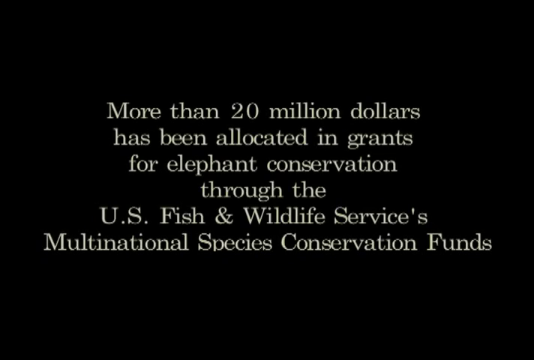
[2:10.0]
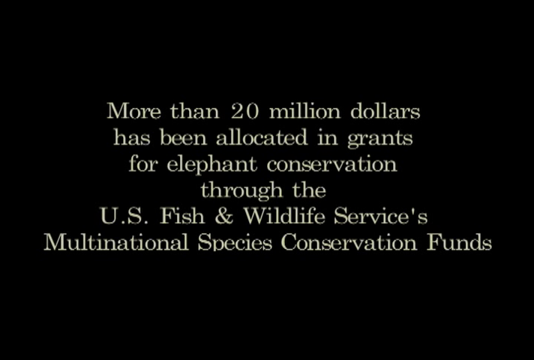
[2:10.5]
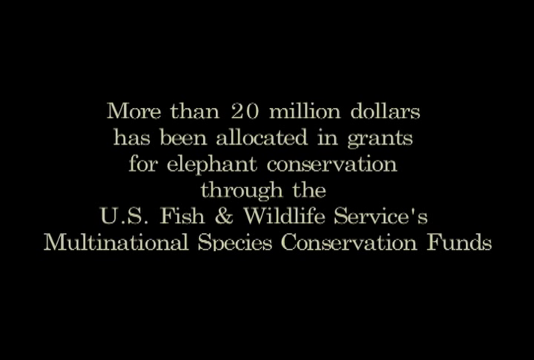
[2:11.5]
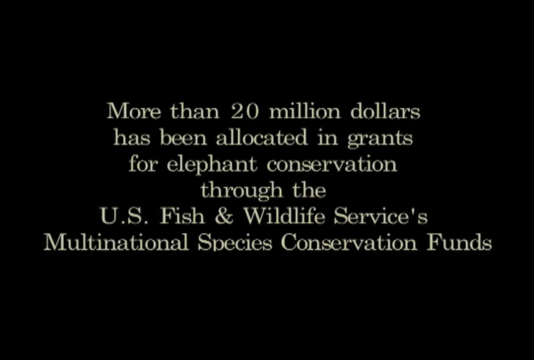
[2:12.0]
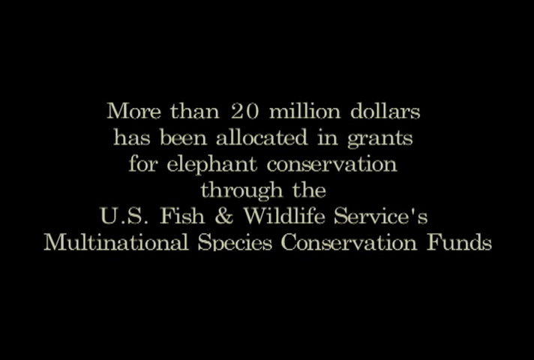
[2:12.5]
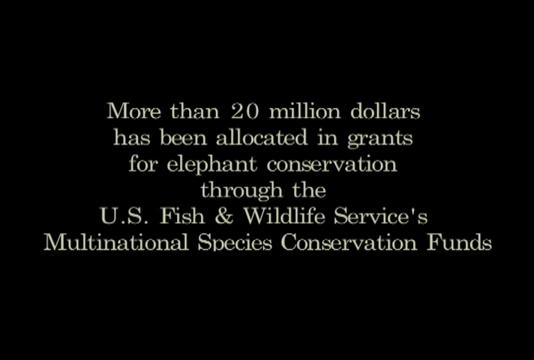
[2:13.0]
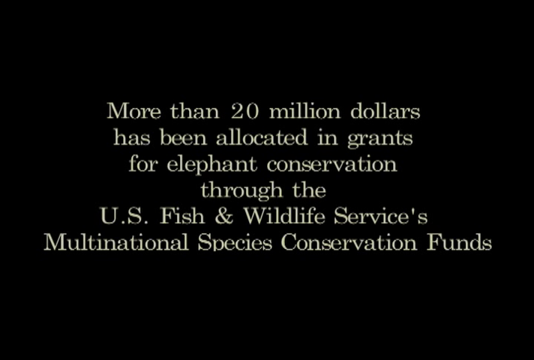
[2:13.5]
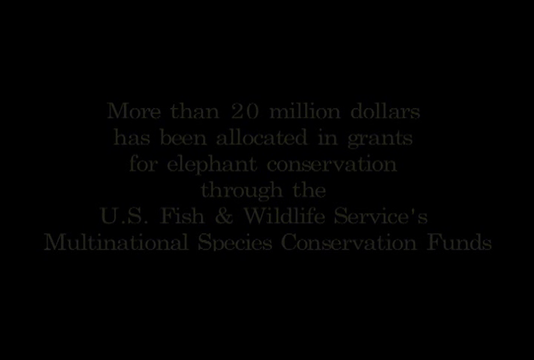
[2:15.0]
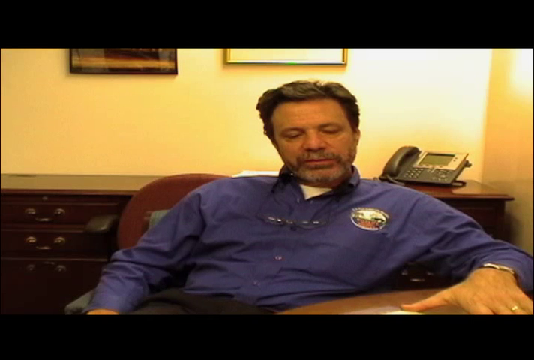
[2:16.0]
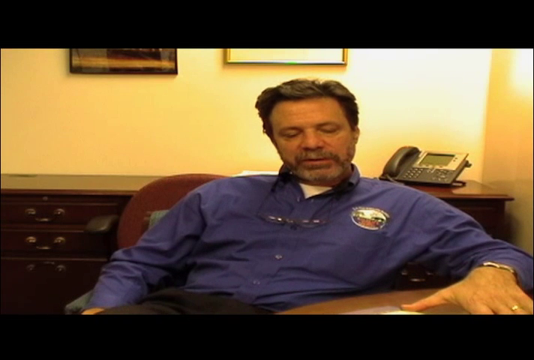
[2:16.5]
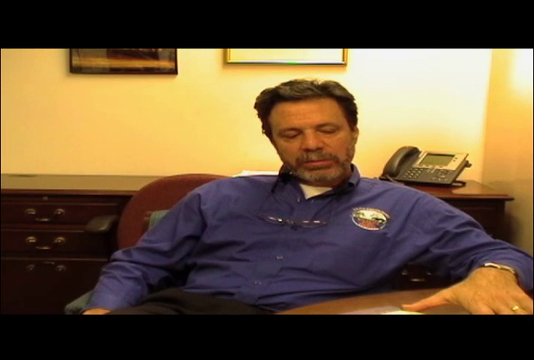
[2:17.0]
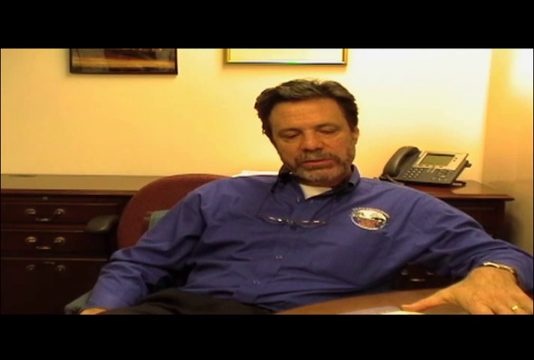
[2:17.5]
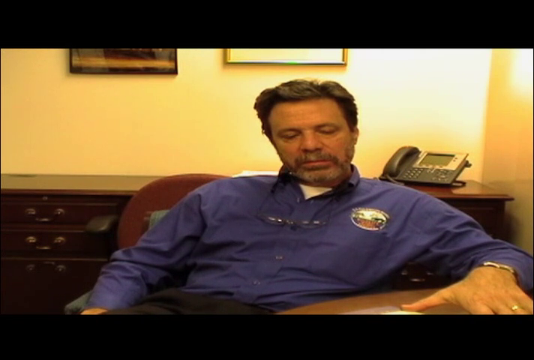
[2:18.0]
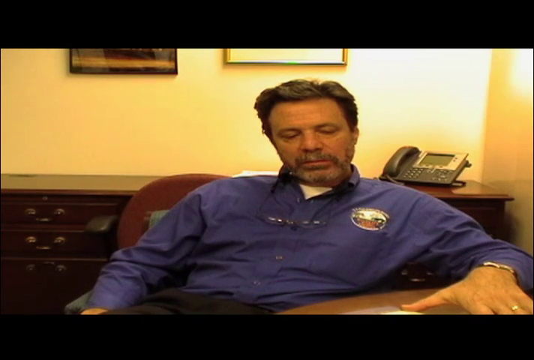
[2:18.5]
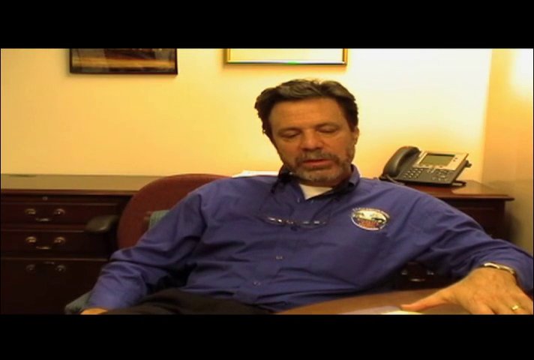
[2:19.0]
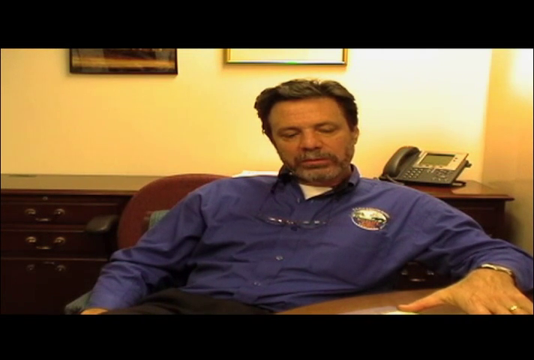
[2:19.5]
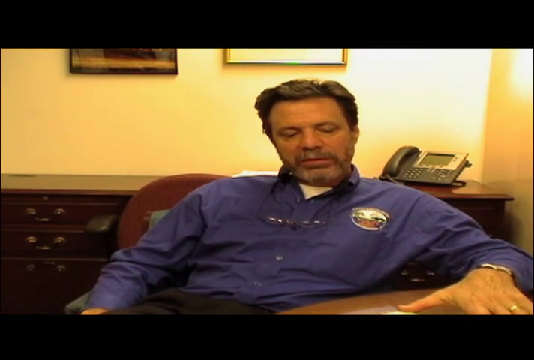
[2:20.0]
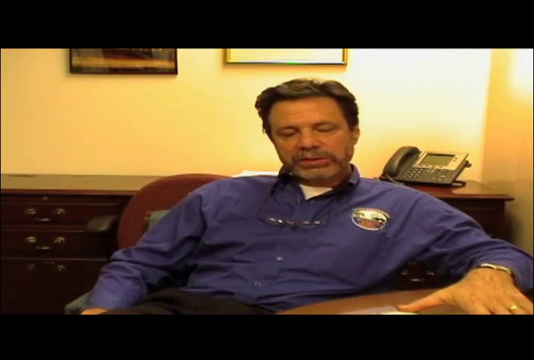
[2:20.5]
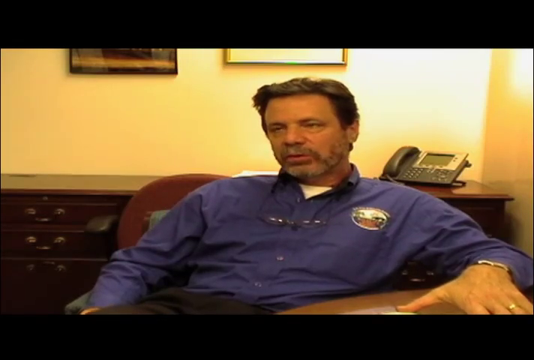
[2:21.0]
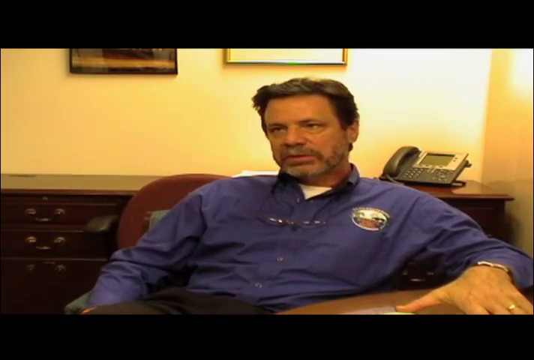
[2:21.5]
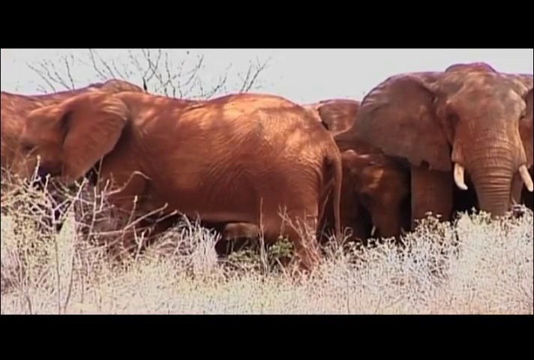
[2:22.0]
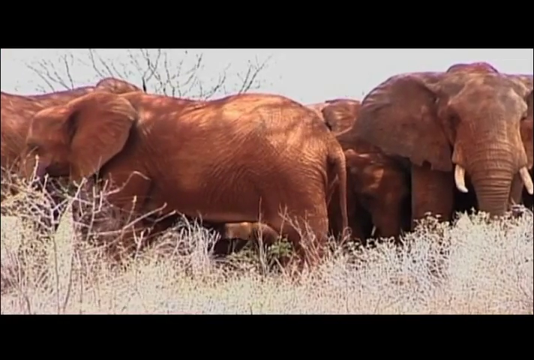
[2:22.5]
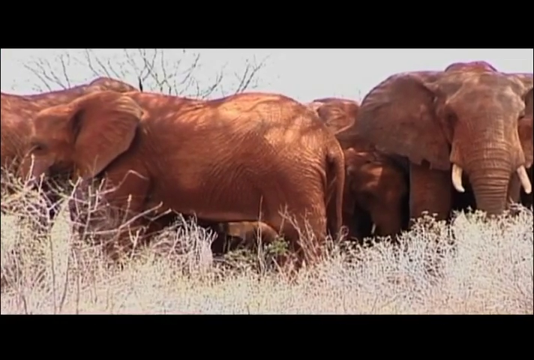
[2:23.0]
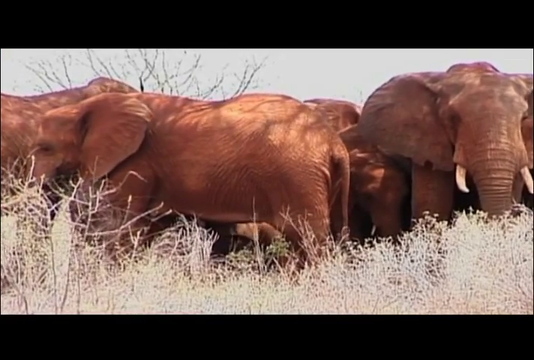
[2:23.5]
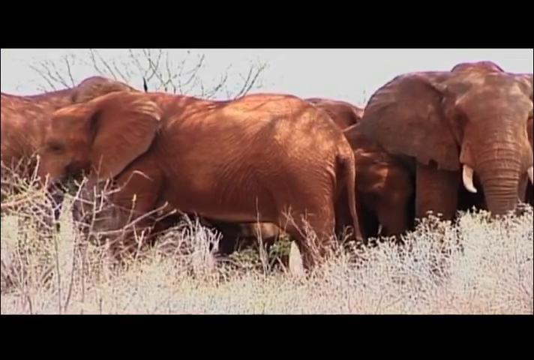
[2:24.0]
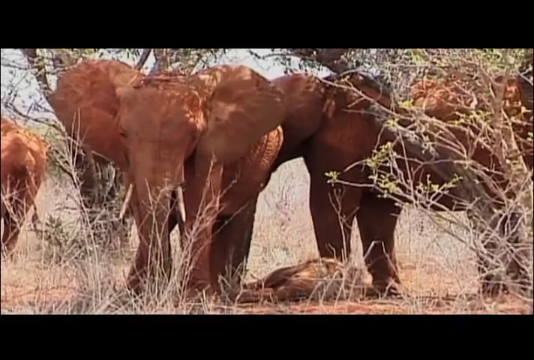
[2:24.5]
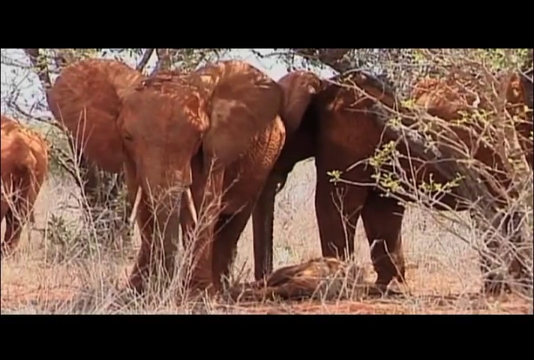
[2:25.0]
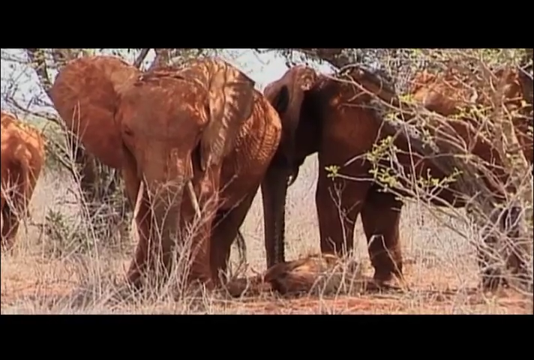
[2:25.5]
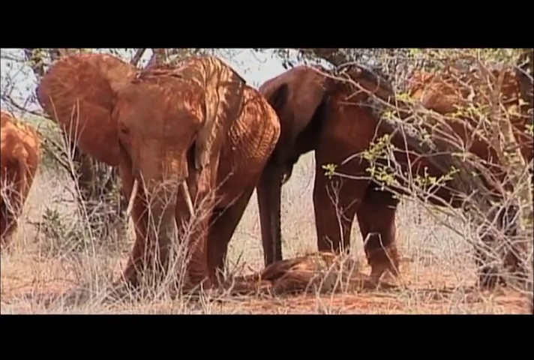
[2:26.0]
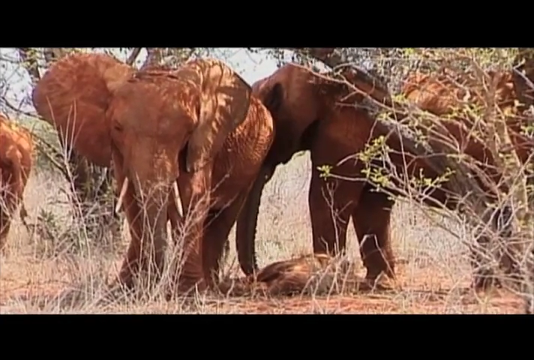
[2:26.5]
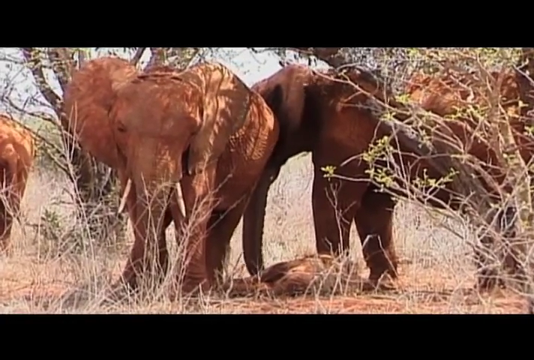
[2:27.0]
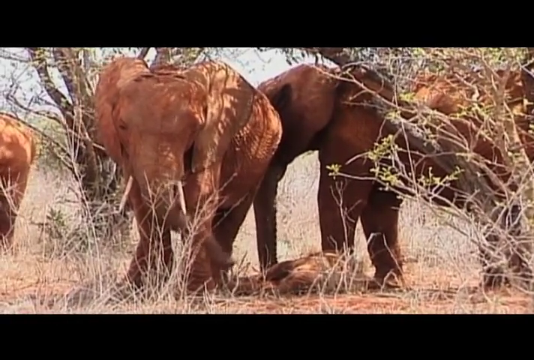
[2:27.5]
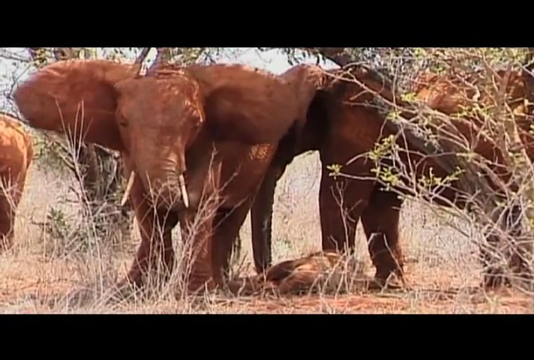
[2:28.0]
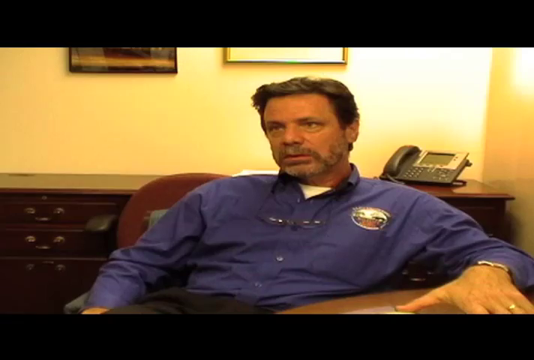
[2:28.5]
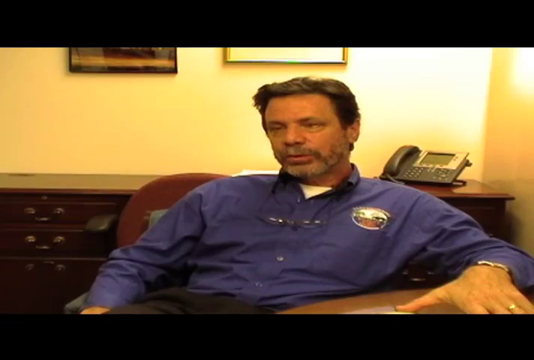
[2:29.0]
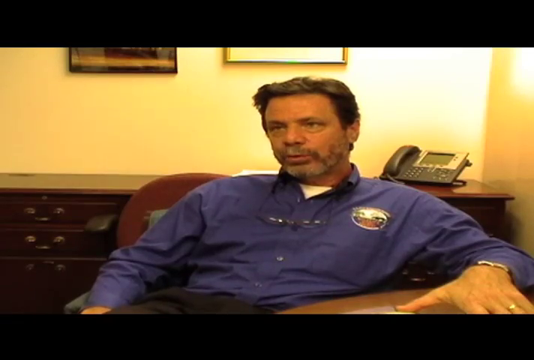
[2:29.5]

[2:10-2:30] The black screen with text is on screen, and then the video returns to the man sitting in the chair in the office, speaking. Behind him is a credenza with a multi-line telephone on it. The video then shows tall savannah grasses bleached almost white in the sun and a small copse of trees. Elephants are huddled together under the trees, gently flapping their ears as if resting in the heat of the day, and a small baby elephant is lying on the ground napping. After two different angles of this scene, the video goes back to the man speaking in the office.